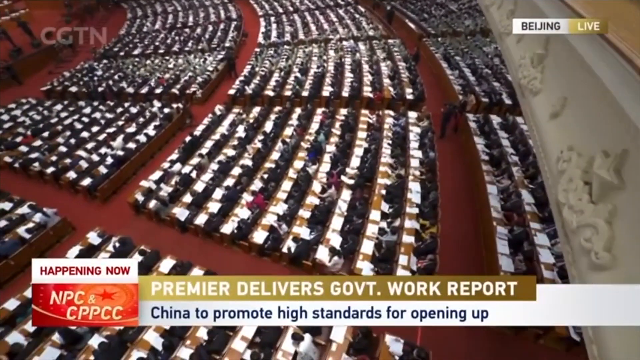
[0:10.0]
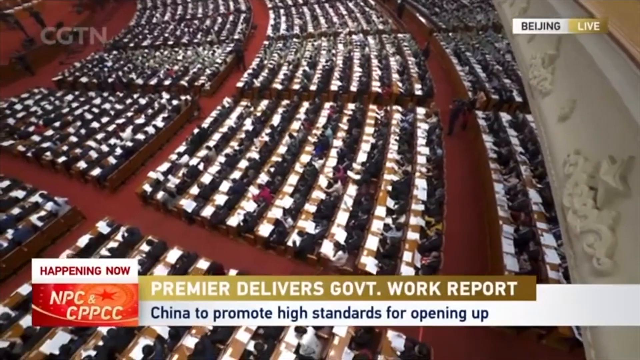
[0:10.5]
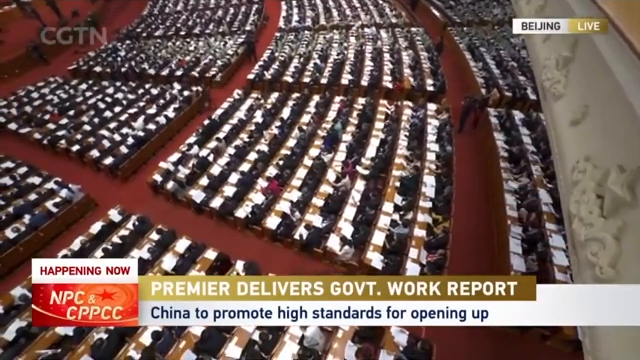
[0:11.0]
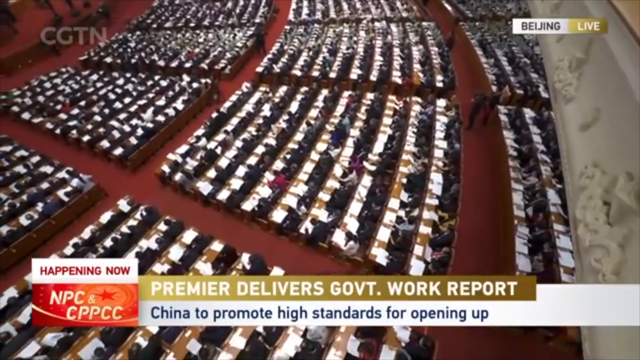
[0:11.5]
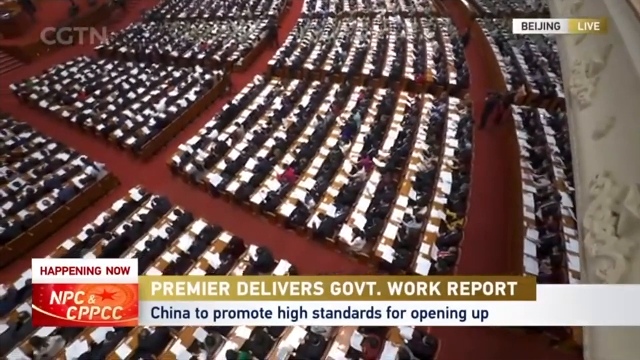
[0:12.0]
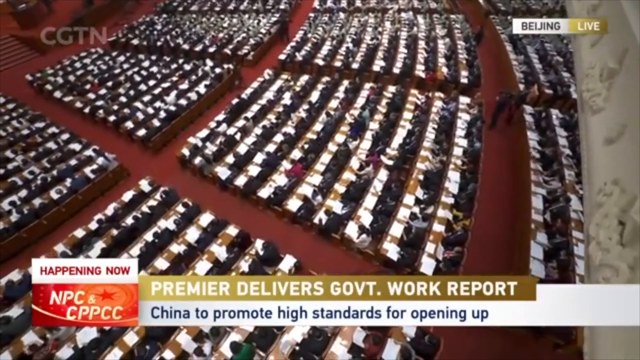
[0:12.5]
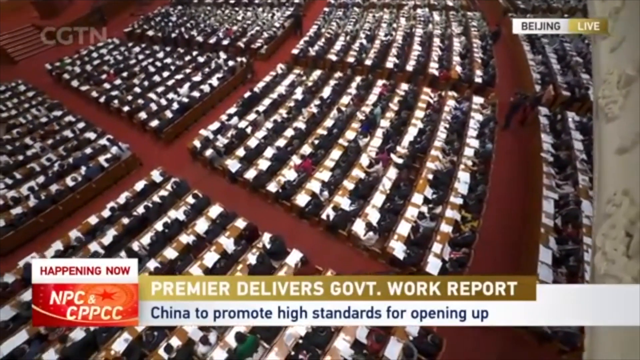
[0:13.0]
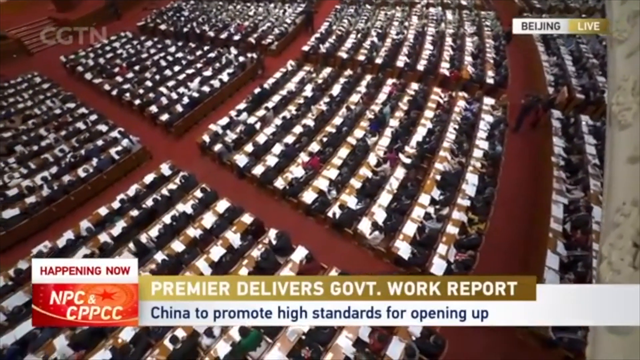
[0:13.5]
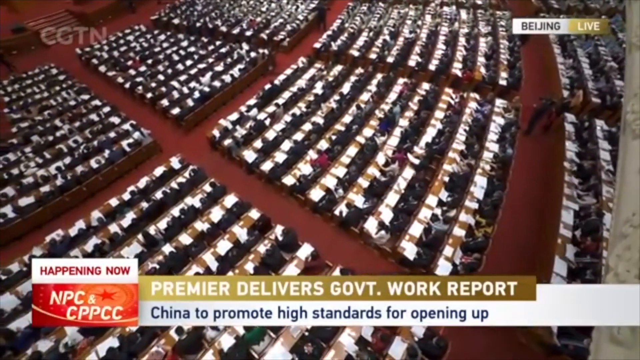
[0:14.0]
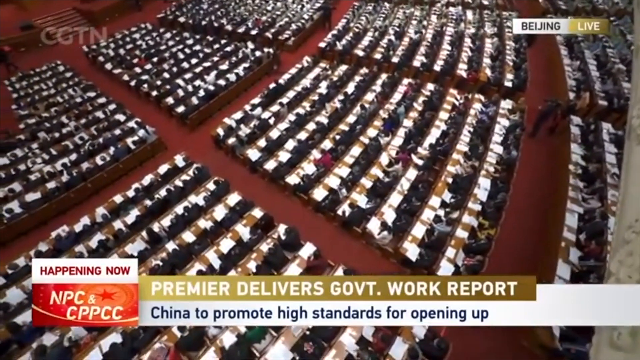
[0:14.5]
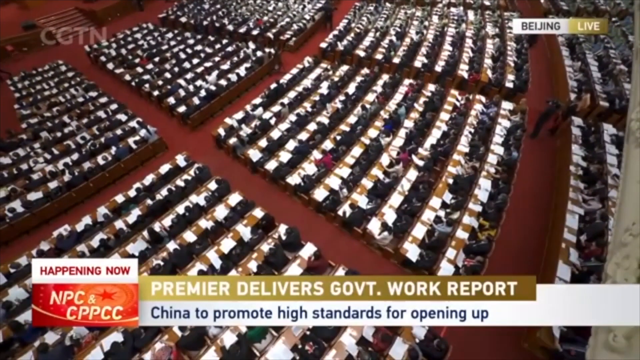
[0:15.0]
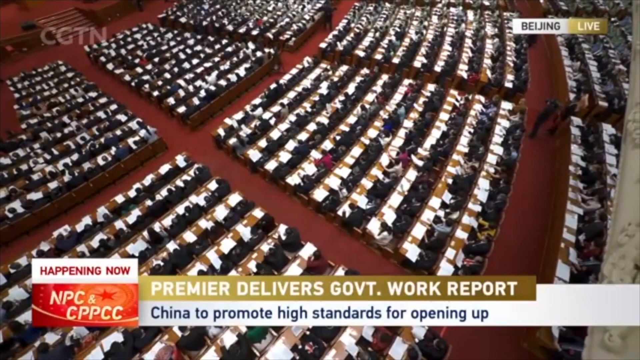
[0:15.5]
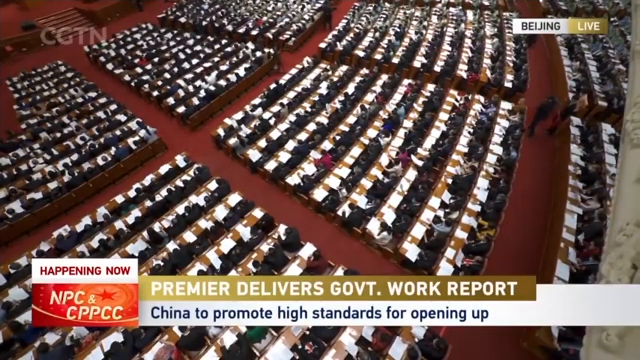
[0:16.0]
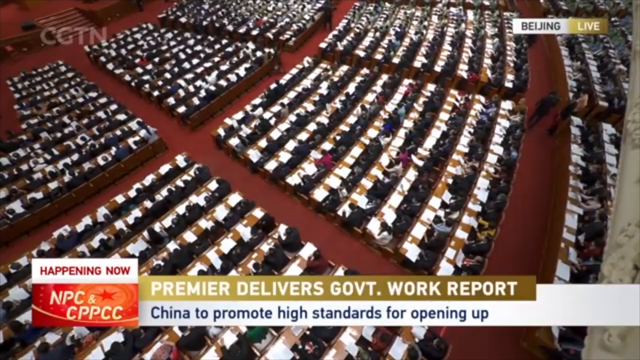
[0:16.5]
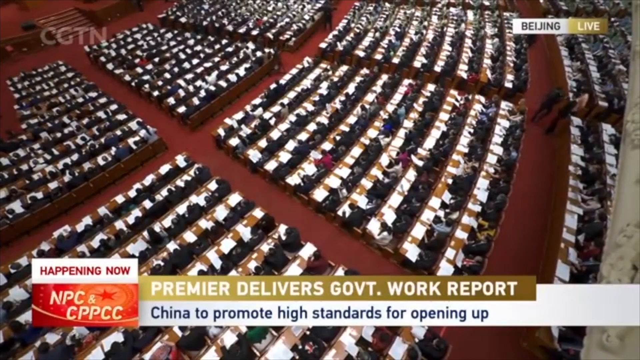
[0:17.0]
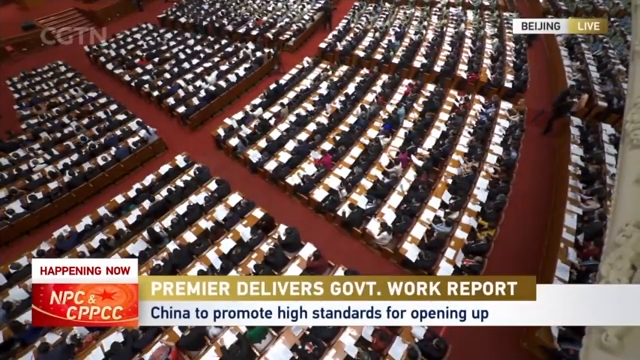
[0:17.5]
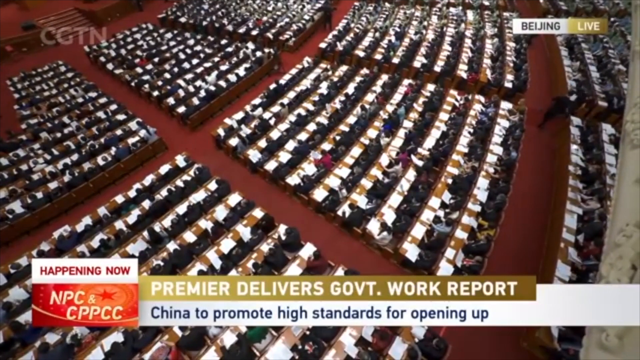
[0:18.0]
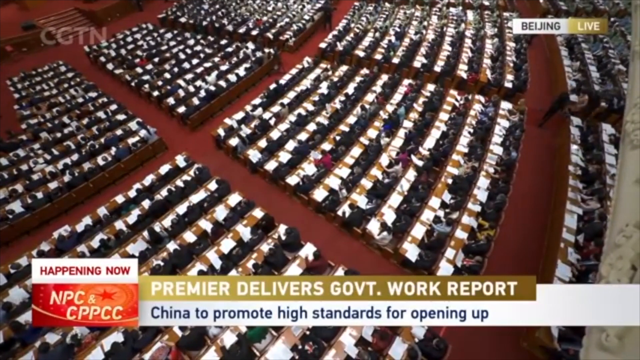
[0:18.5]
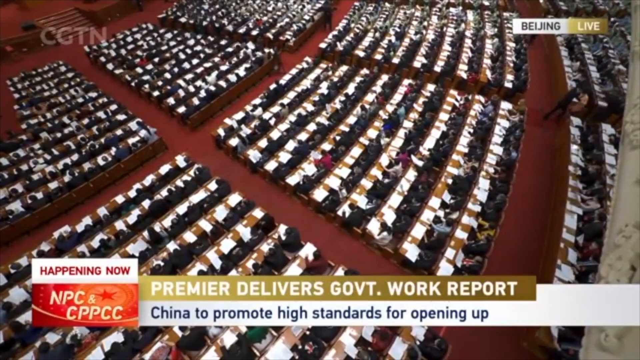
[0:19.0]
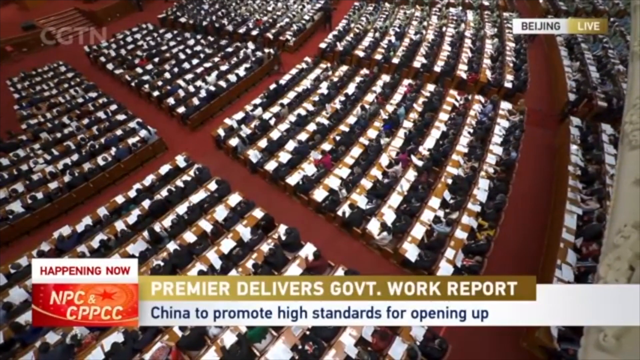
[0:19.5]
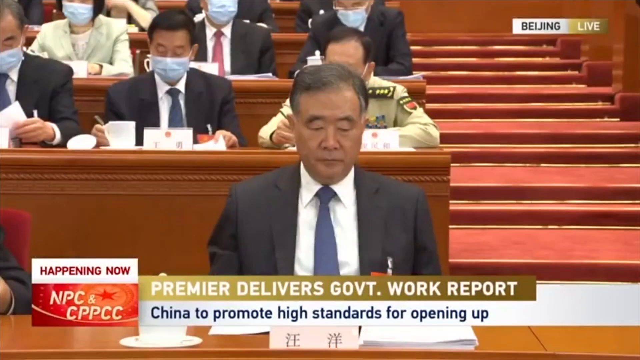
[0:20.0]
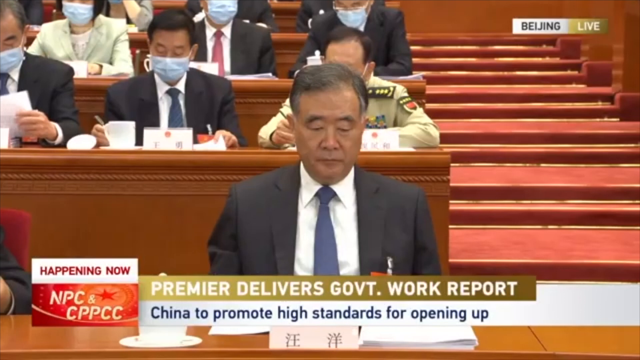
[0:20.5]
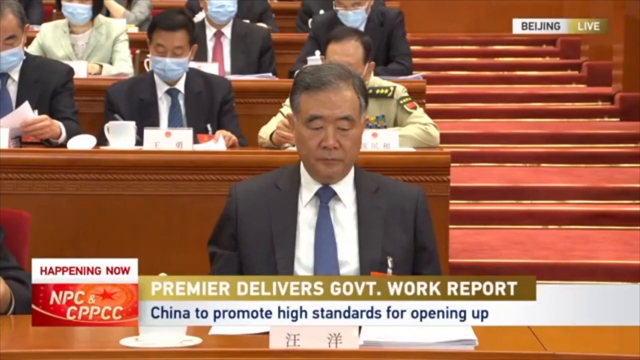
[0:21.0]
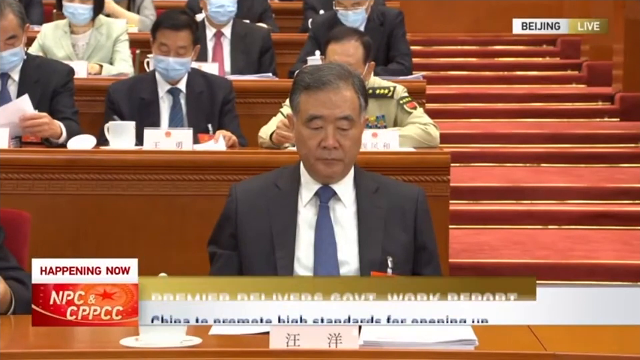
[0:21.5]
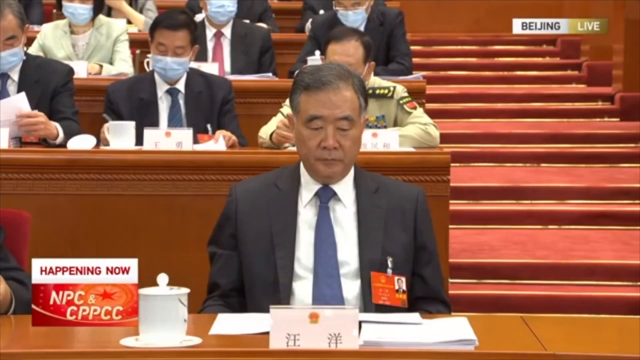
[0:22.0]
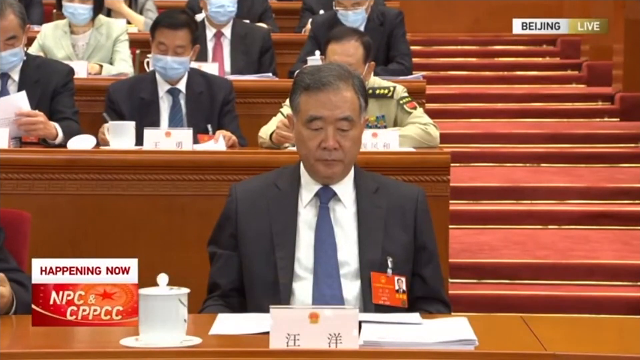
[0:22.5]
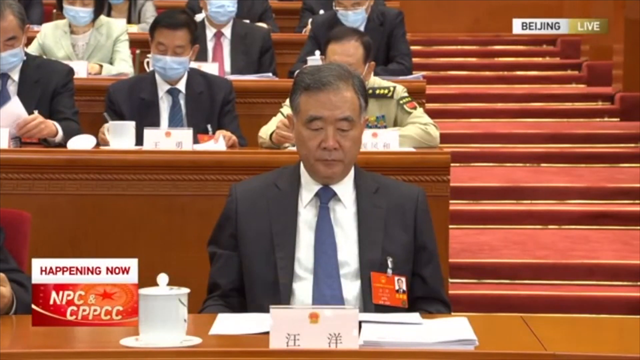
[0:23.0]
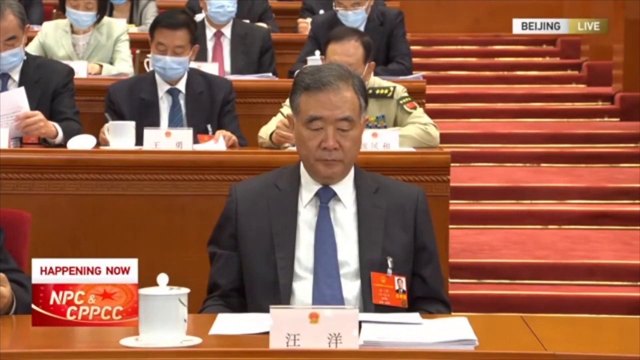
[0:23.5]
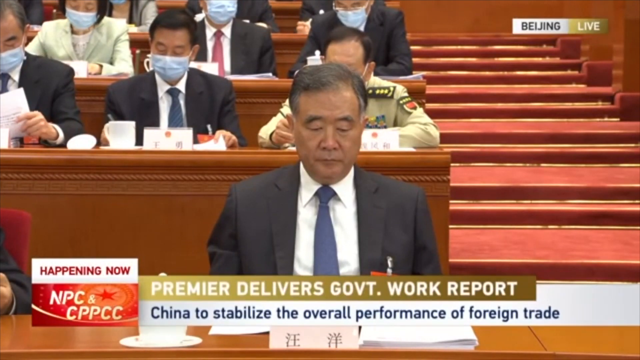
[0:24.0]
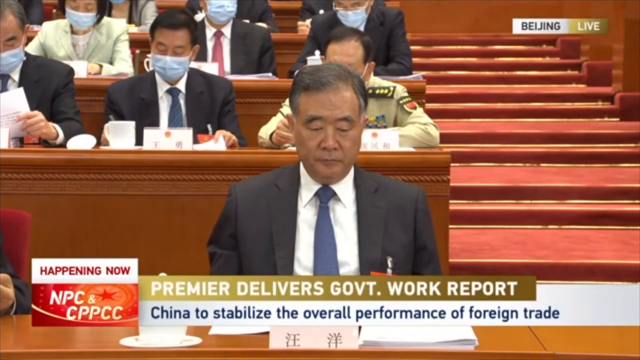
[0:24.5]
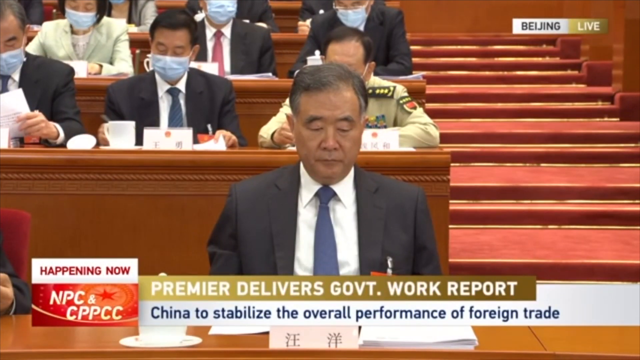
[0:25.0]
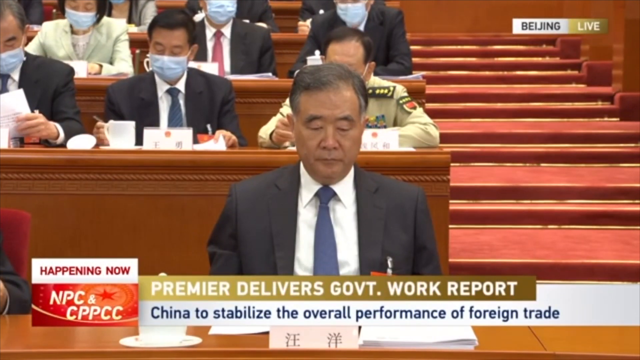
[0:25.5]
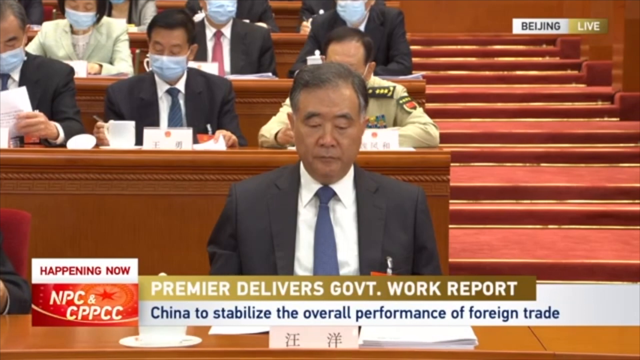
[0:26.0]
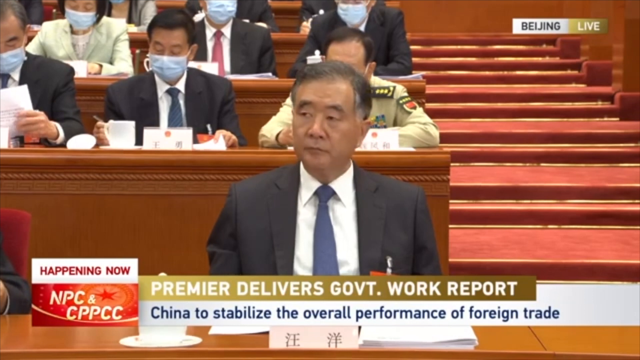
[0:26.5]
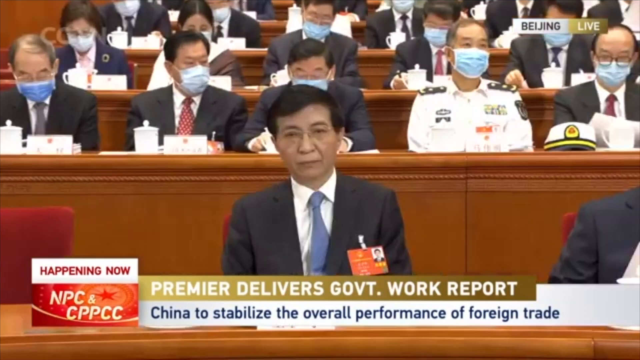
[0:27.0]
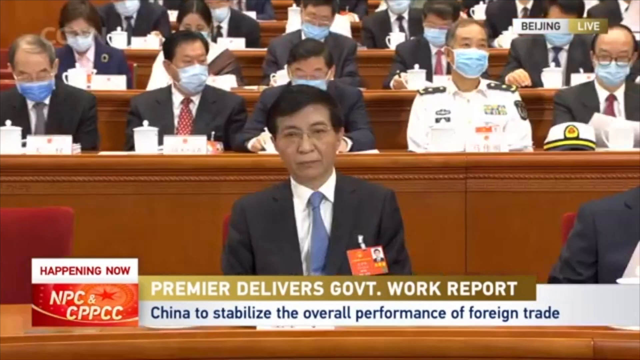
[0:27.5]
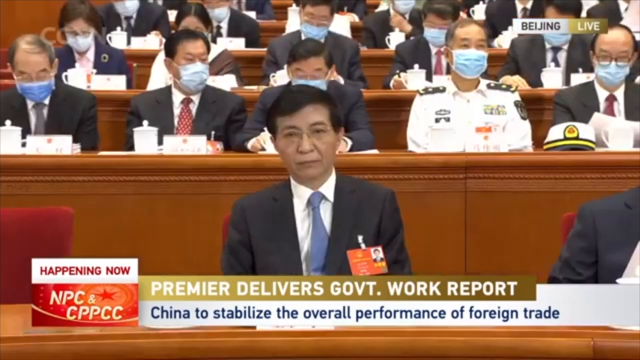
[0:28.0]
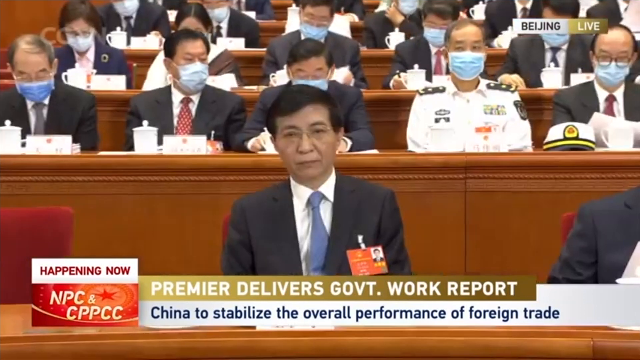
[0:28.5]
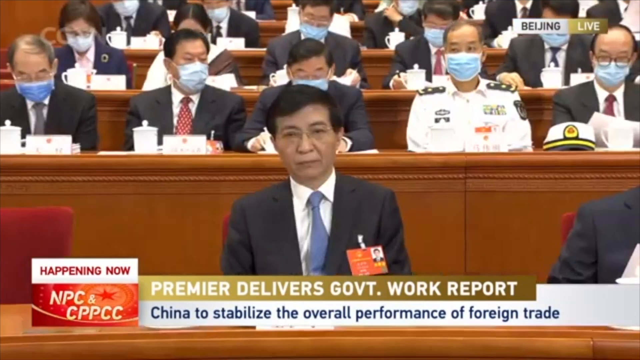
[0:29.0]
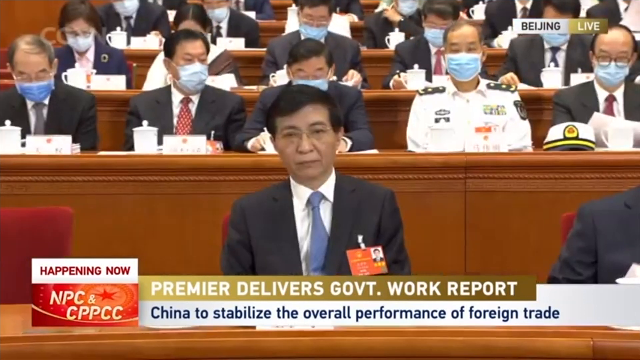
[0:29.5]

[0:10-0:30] The overhead view of the Chinese government continues, showing various rows of people all sitting at similar desks with similar white pieces of paper on them. A somewhat opaque white logo in the top left reads "CGTN". The lower third at the bottom continues to read "Premier delivers government work report", with red "Happening now" text on its left side and "NPC and CPPCC" in white lettering underneath. The camera stops panning and goes to the front portion of the stadium, showing somebody at the front sitting down, and another prominent figure from the left side, much skinnier and seemingly a little older, wearing a suit. Both seem to be looking down at papers, and each has a red-style lanyard attached to the side of his suit jacket.